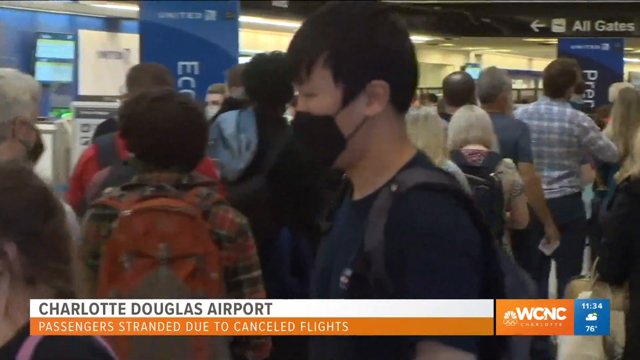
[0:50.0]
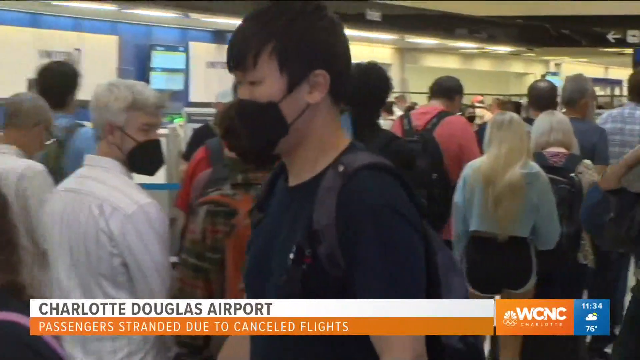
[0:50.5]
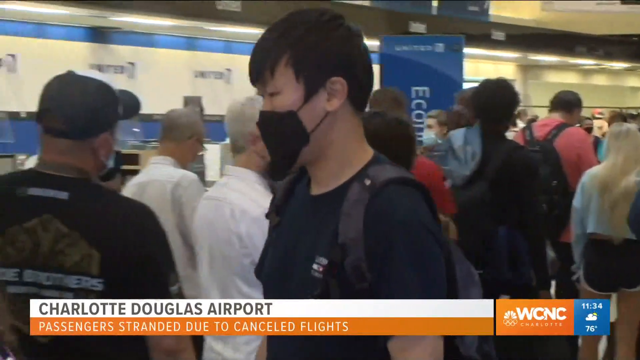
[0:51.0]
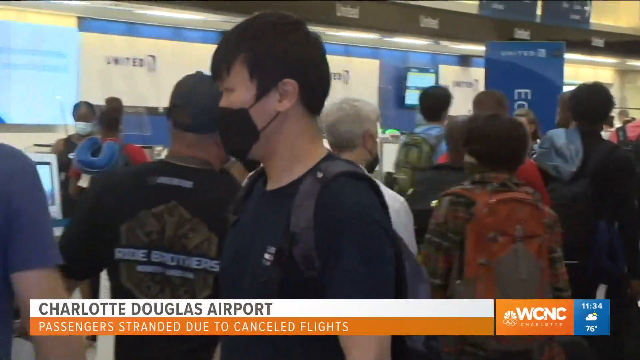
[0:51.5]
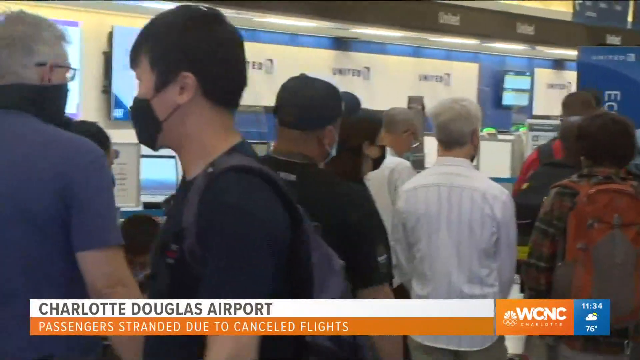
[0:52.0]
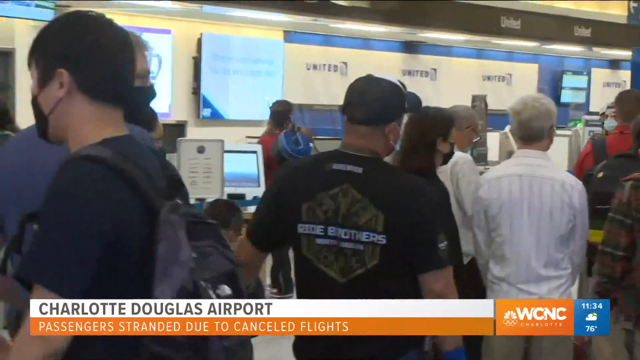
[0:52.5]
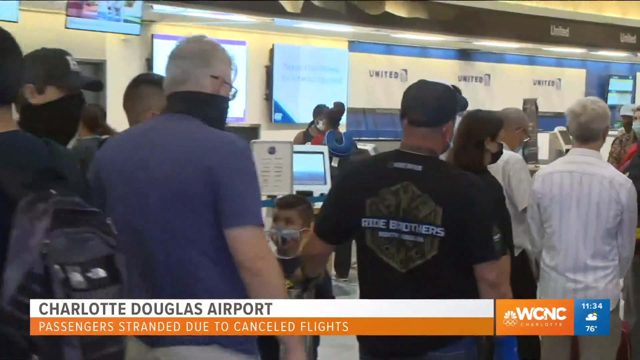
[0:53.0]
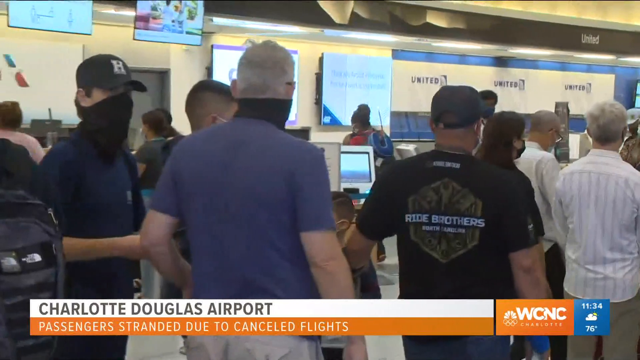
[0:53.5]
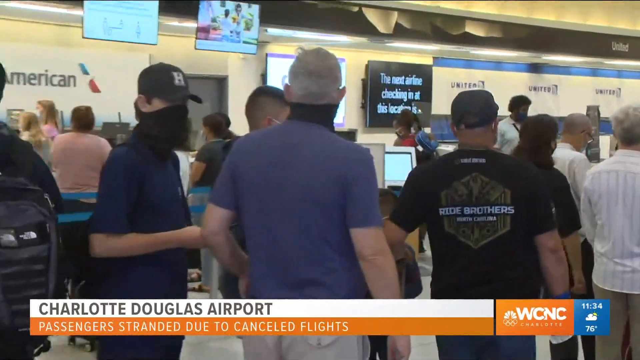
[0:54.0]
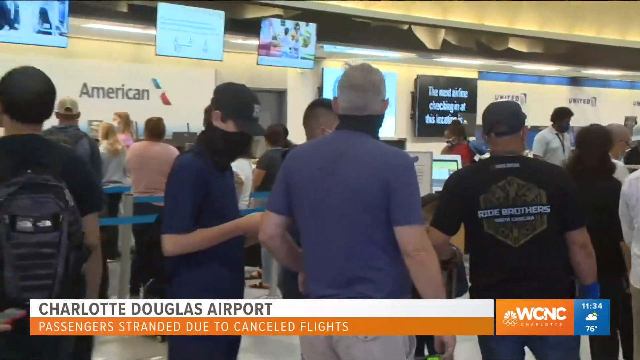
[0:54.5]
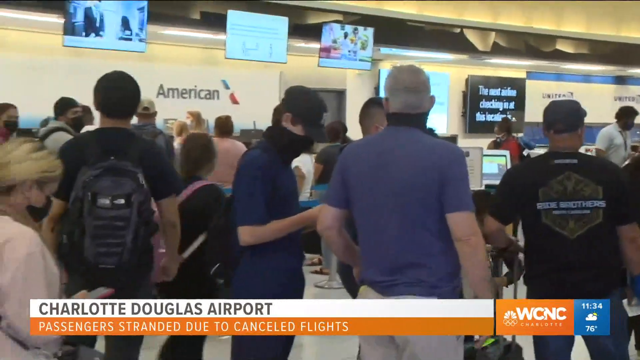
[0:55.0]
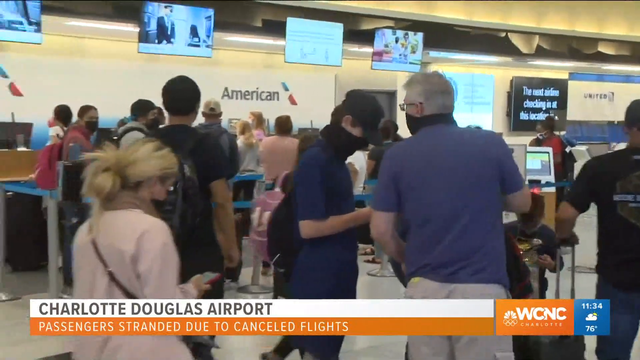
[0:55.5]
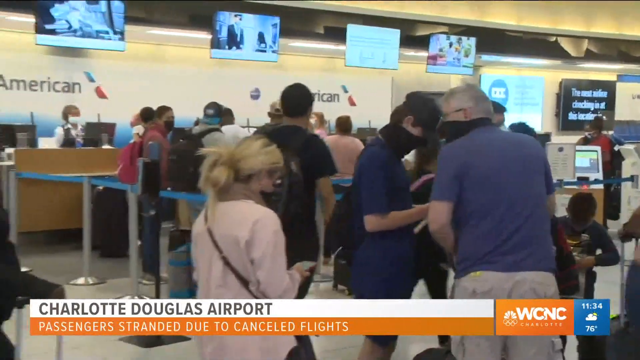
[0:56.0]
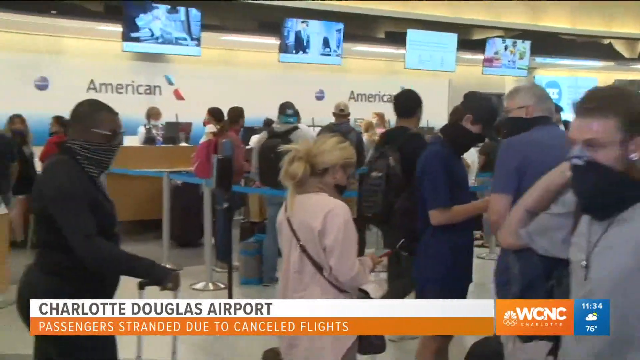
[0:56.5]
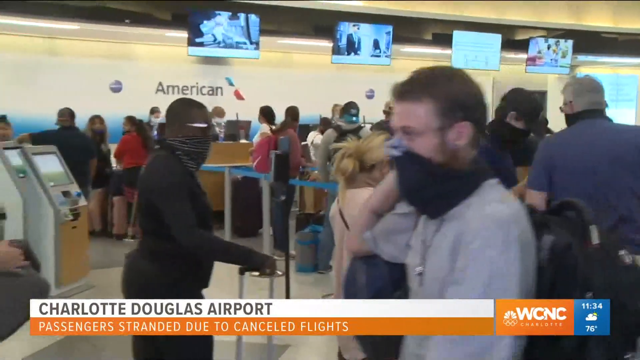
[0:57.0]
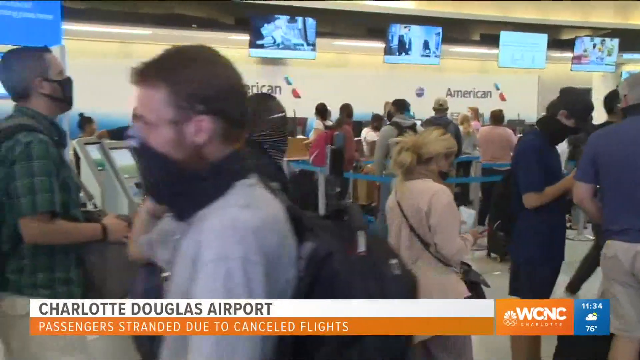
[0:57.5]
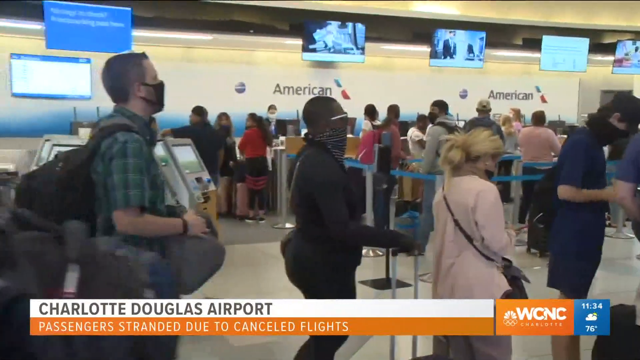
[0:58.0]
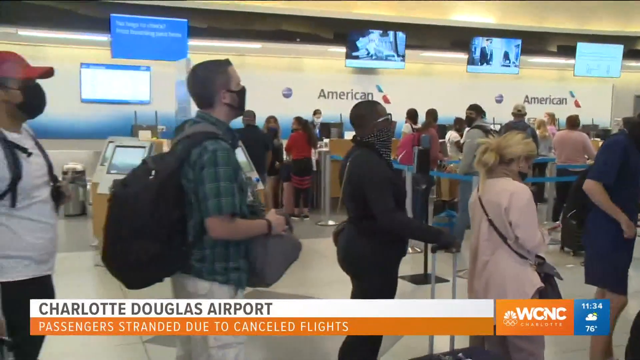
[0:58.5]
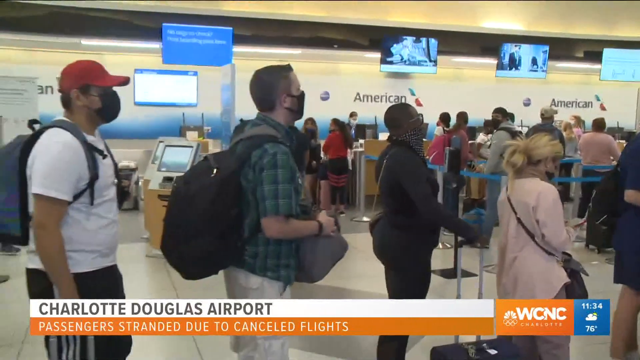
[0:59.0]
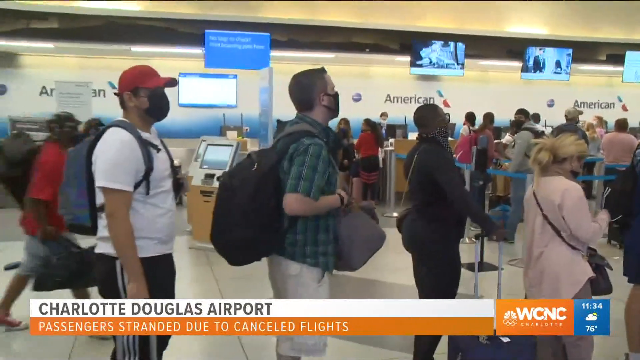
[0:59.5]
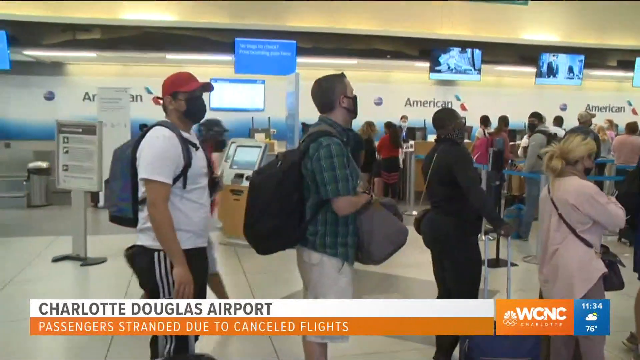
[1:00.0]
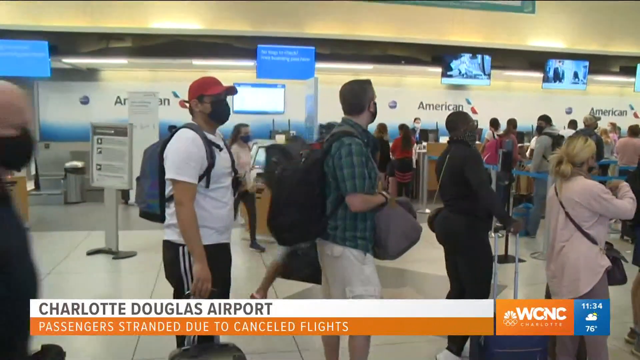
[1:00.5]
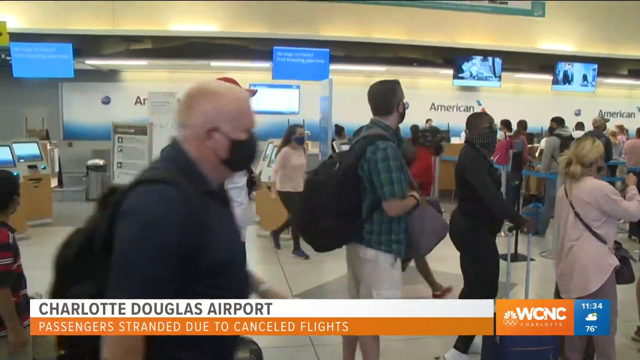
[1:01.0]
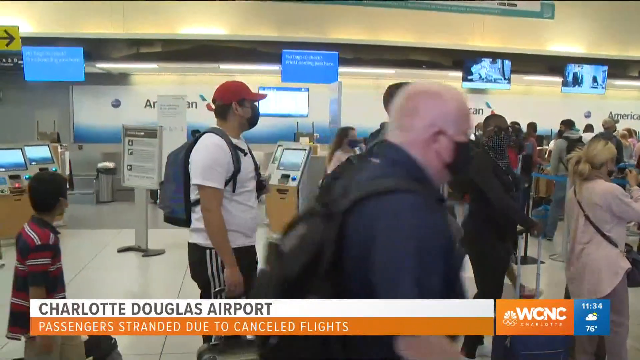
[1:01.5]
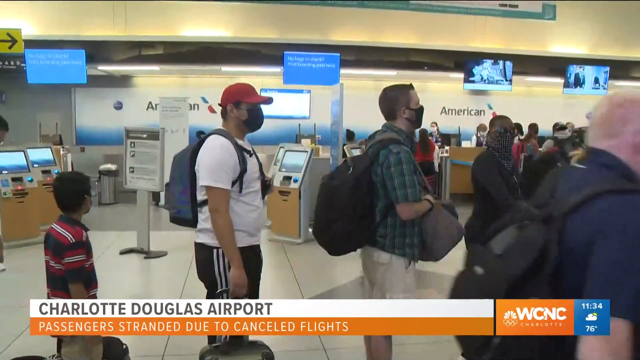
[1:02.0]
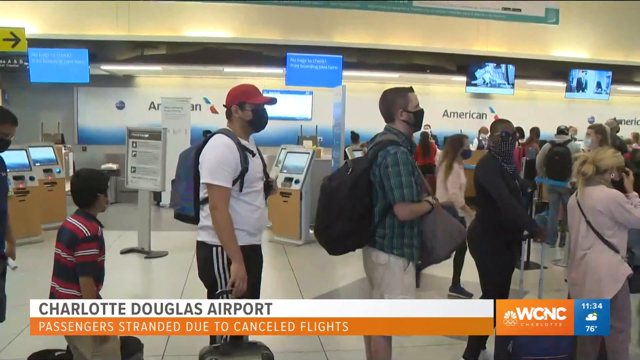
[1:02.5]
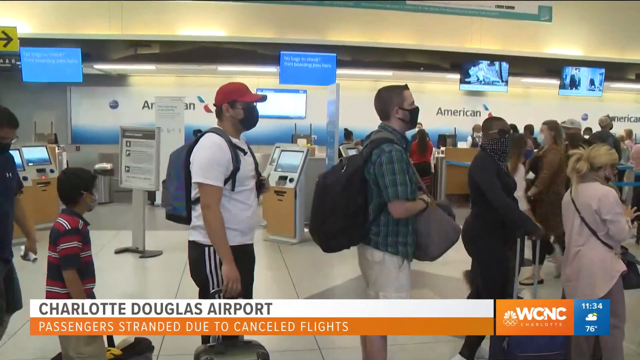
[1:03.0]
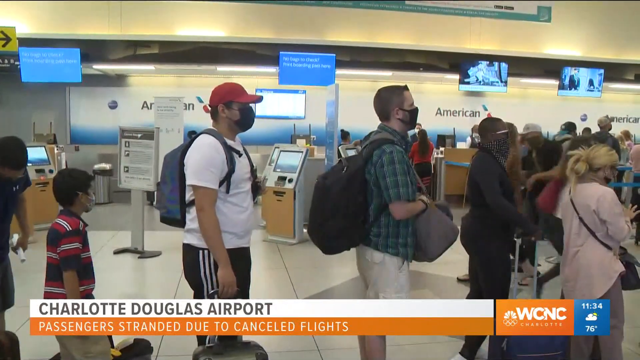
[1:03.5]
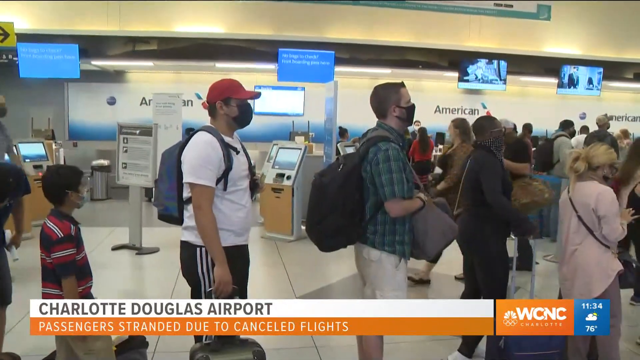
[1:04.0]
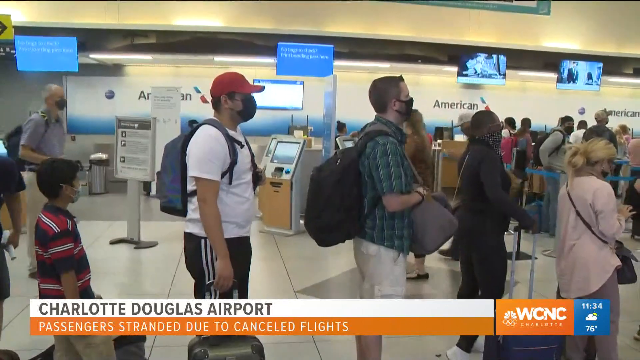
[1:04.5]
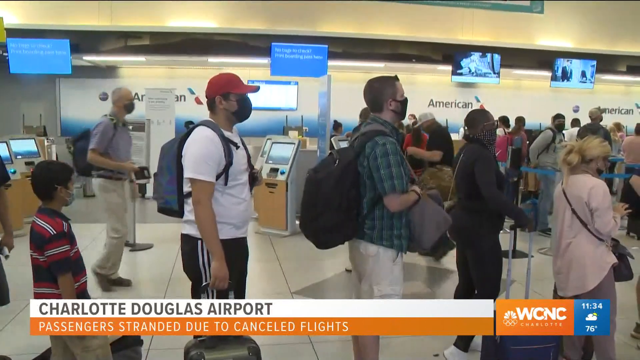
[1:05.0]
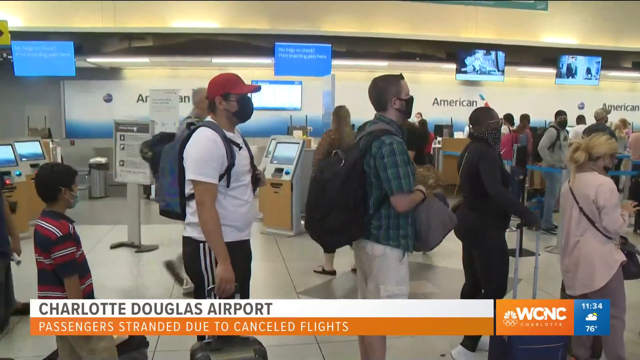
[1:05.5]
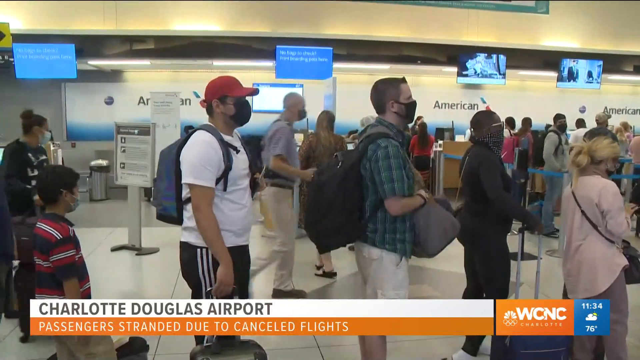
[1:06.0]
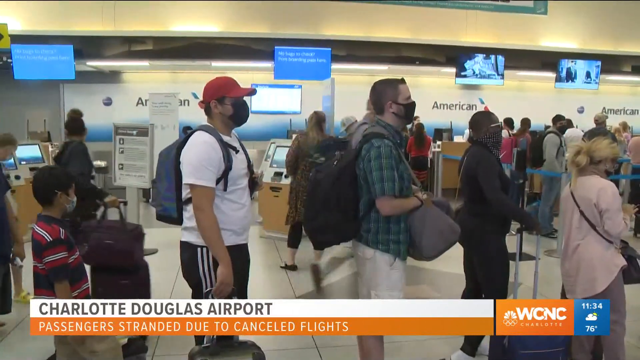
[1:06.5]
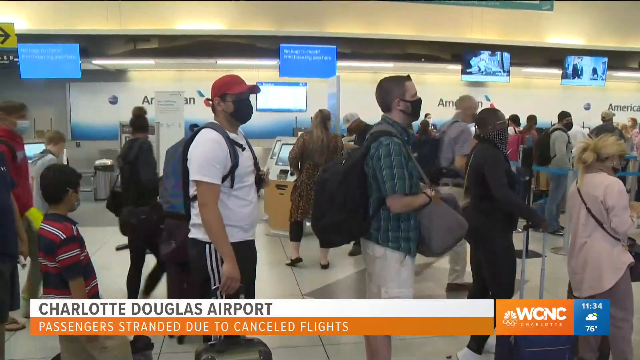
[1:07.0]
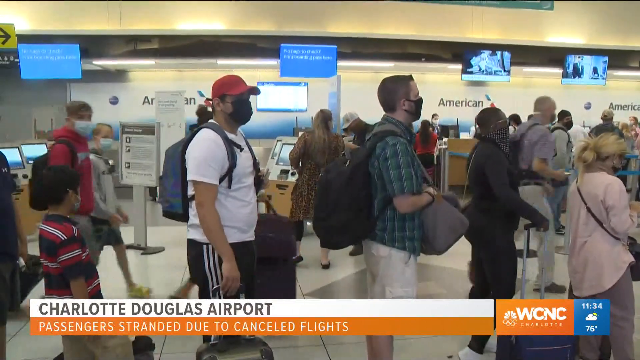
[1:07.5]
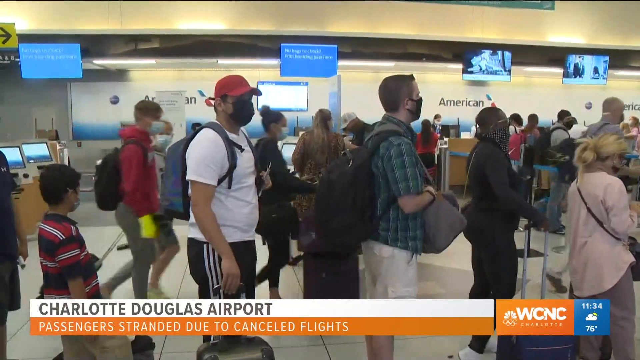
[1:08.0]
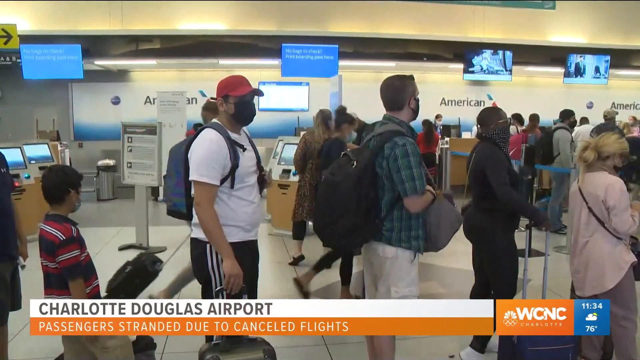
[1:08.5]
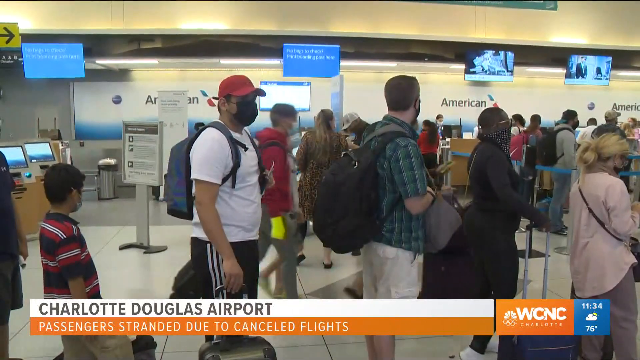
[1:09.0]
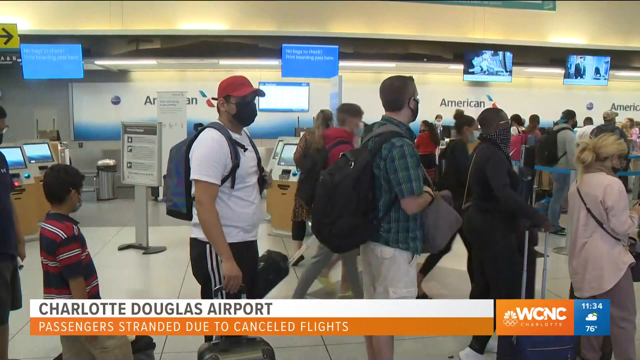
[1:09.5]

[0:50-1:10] Many people are in the very crowded airport, walking here and there, and they all seem very busy. This is the Douglas airport, which seems to be in the USA.